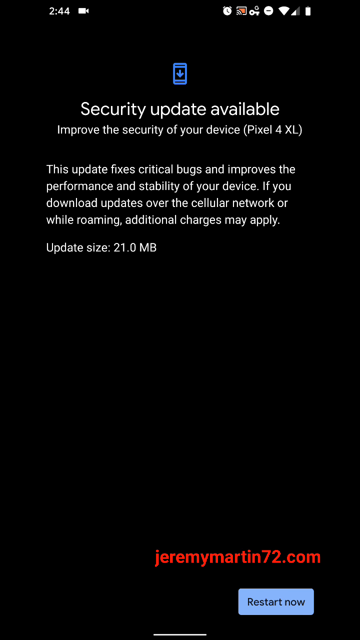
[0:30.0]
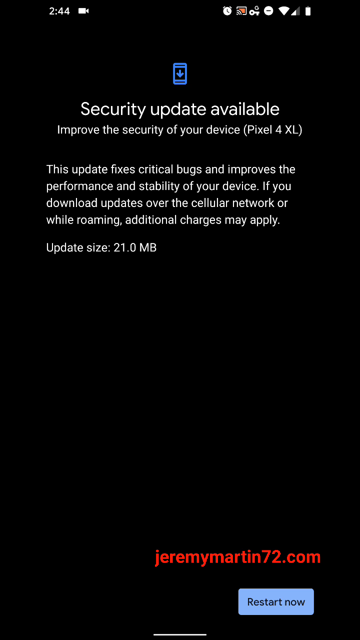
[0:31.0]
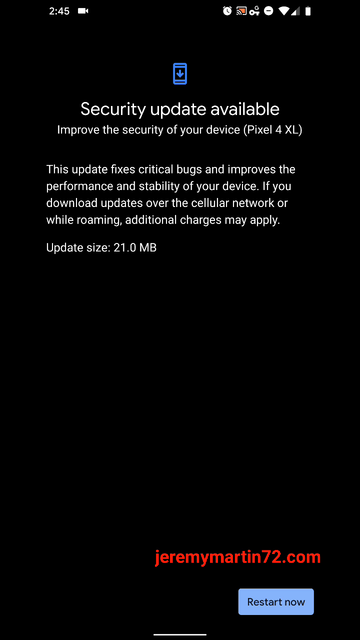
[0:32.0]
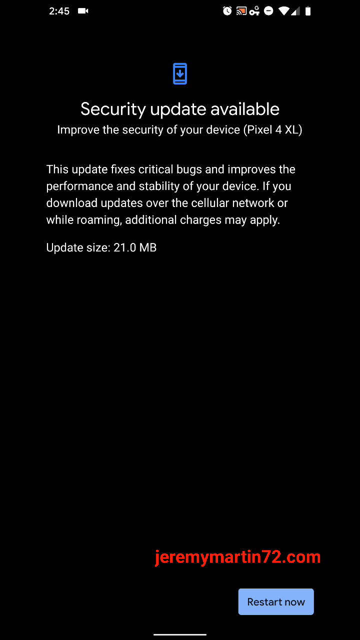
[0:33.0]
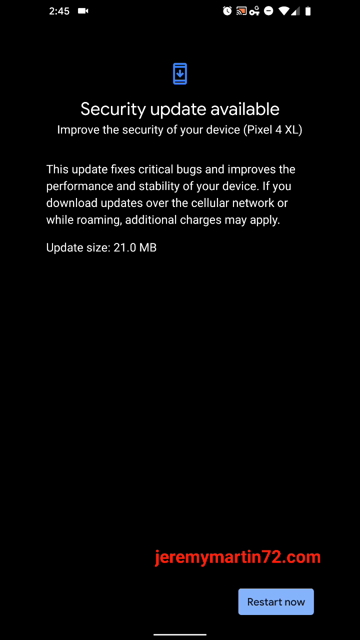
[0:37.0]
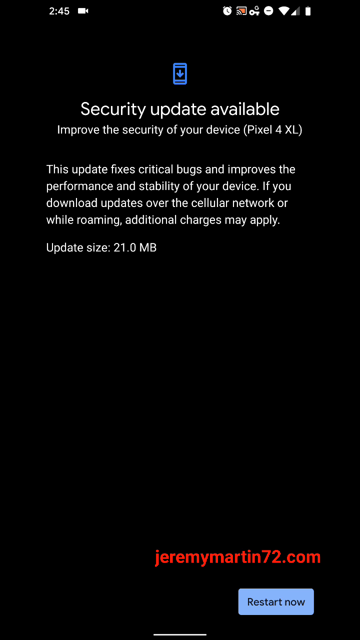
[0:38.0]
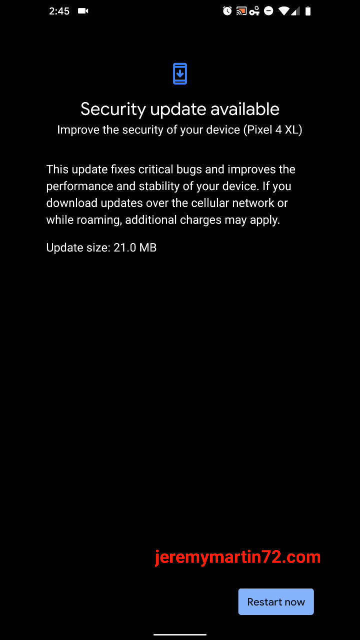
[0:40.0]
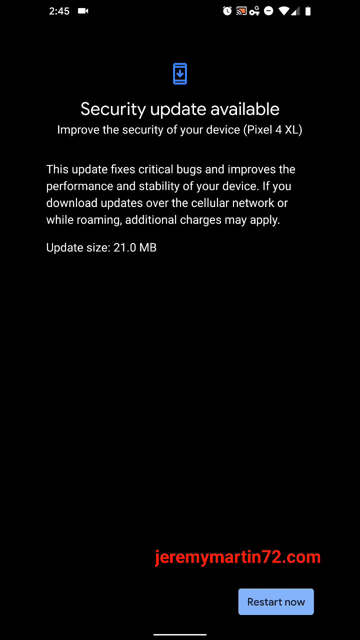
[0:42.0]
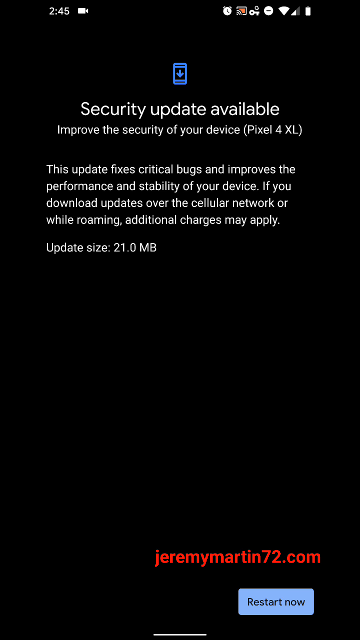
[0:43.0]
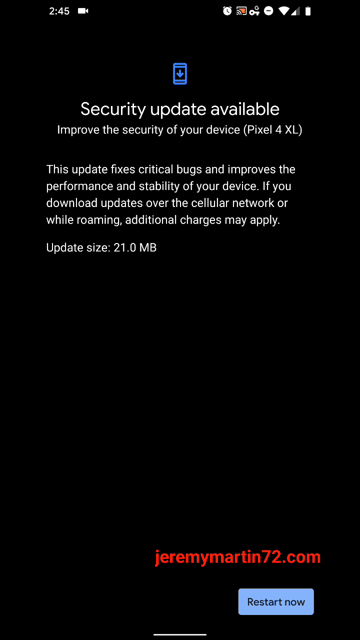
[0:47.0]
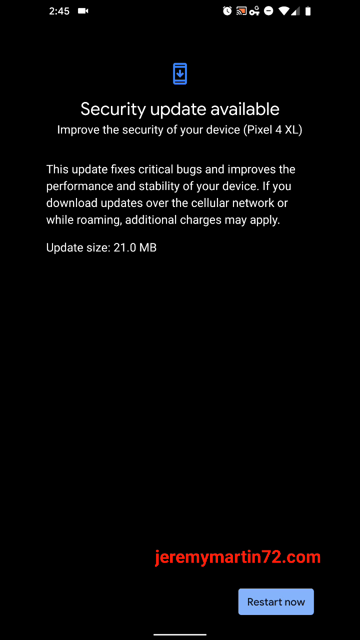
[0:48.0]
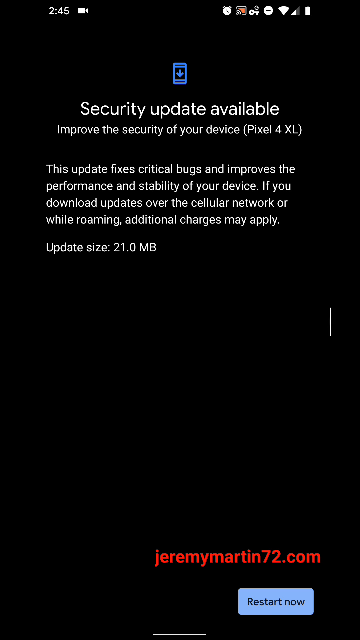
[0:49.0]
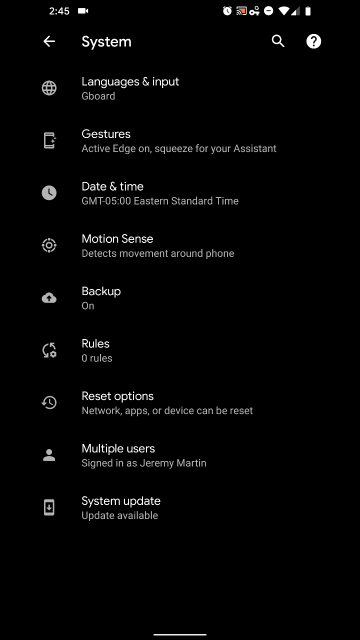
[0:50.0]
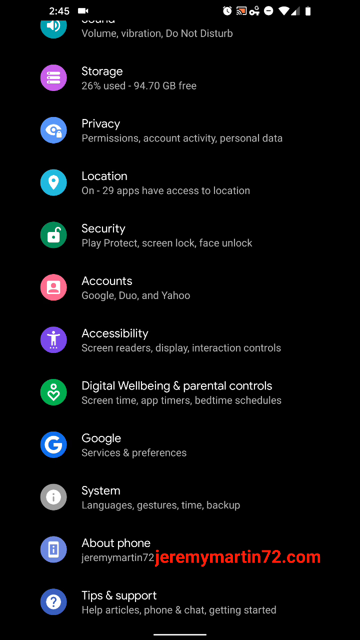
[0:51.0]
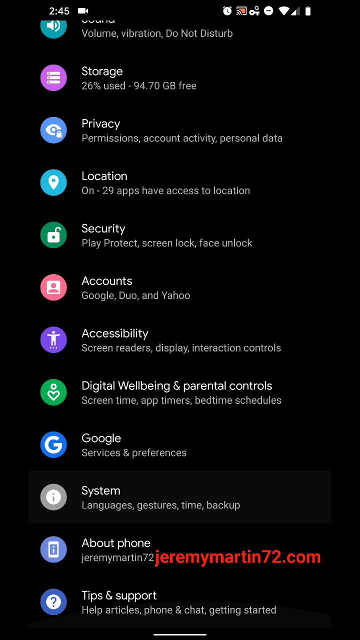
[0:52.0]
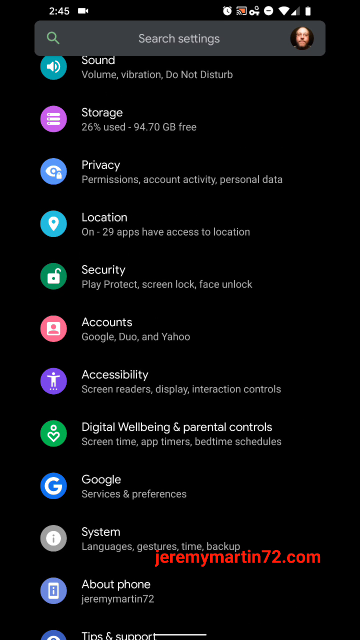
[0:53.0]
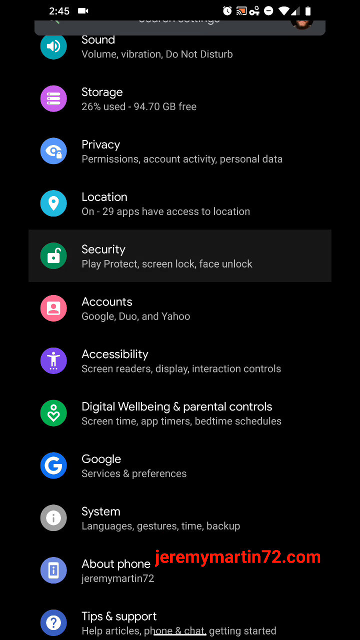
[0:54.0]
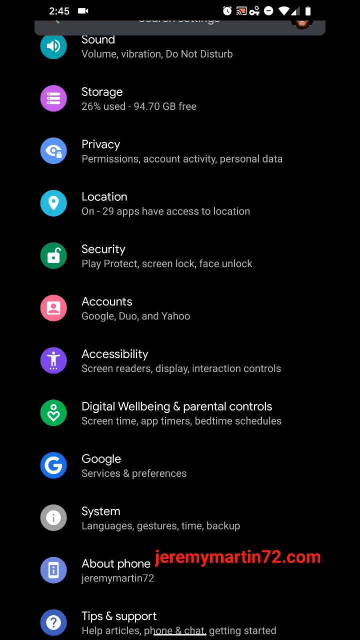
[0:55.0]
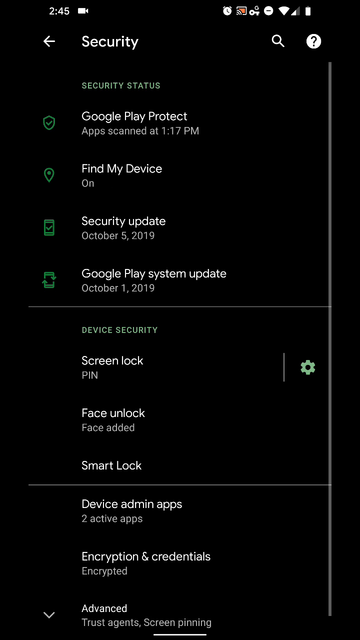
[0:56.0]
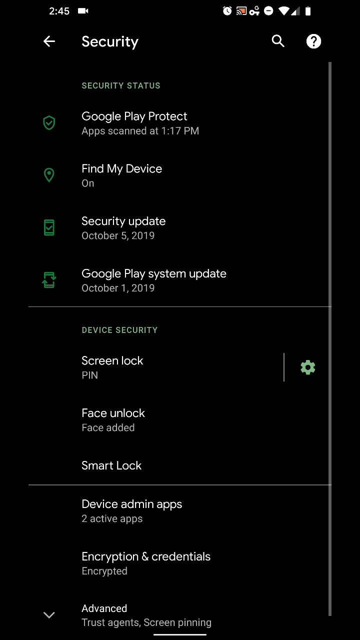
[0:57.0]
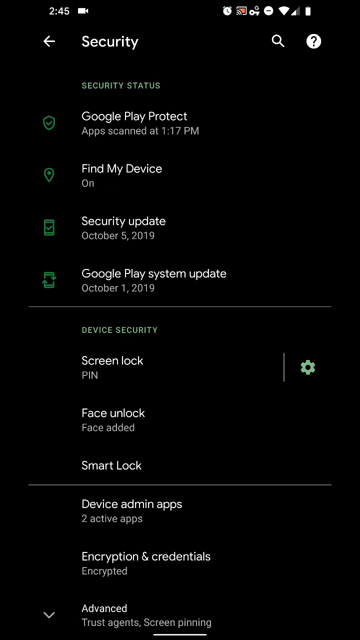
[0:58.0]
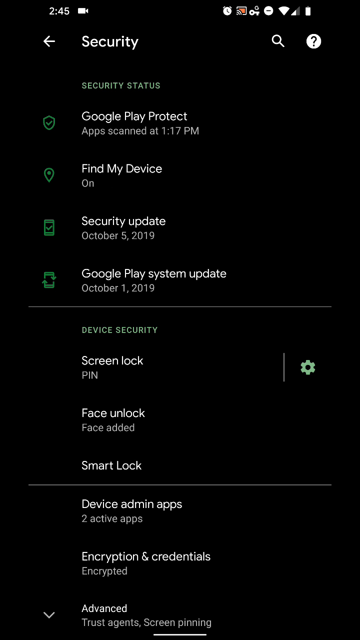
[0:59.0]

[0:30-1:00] An all-black screen shows the notifications and different symbols at the top with the time. In the top center there is a blue icon for a mobile device, and underneath it white text reads "Security Update Available". More information about the update follows: "improve the security of your device Pixel 4 XL. The update fixes critical bugs and improves the performance and stability of your device. If you download updates over the cellular network or while roaming, additional charges may apply." The final white text reads "Update Size 21.0 MB". In the bottom right corner, "JeremyMartin72.com" appears in red text with a blue "Restart Now" button right underneath it. The page stays for several seconds, as if the user is reading the update information. Finally the user backs out to the settings, scrolls toward the top, where there is a search bar with a profile picture inside it, and then navigates to the security section.